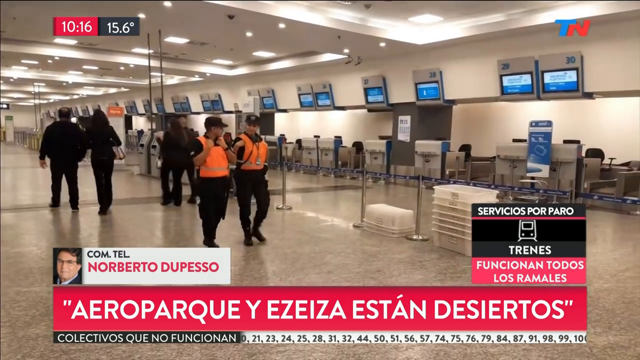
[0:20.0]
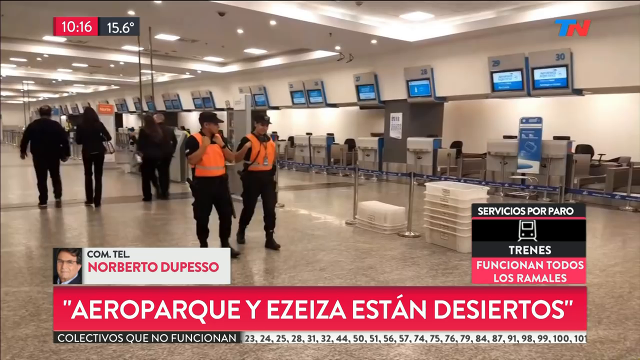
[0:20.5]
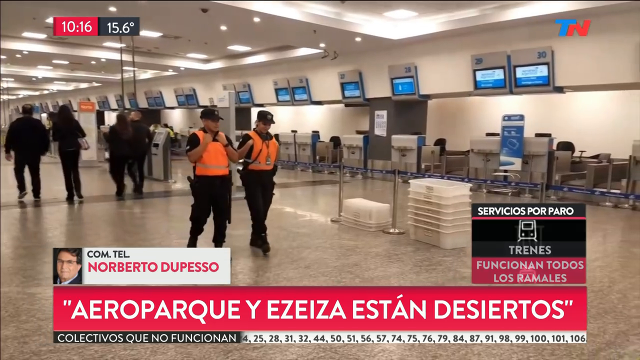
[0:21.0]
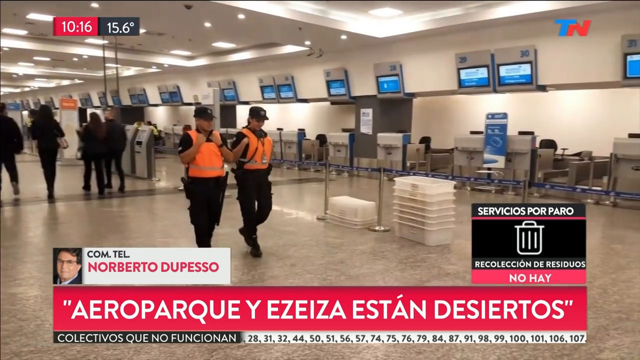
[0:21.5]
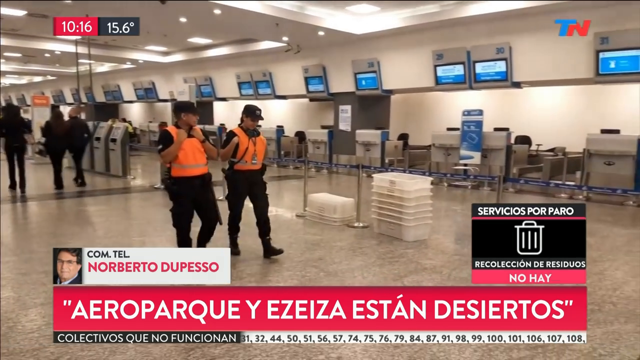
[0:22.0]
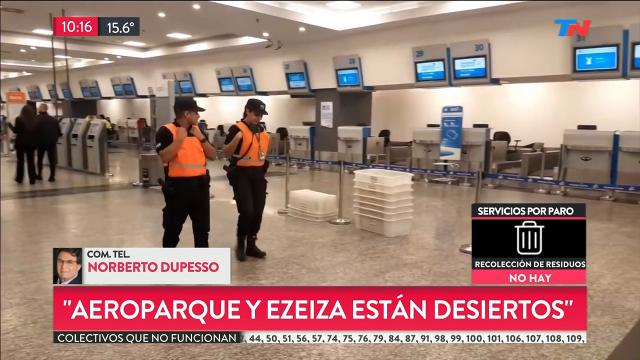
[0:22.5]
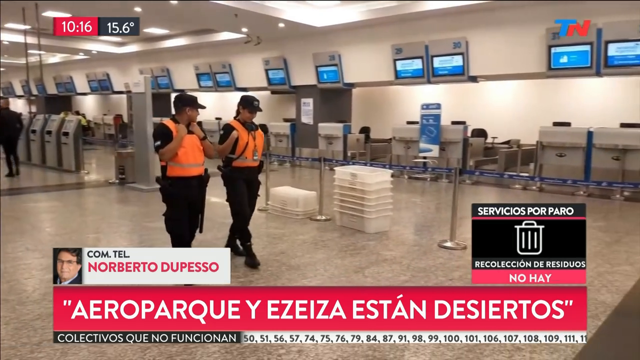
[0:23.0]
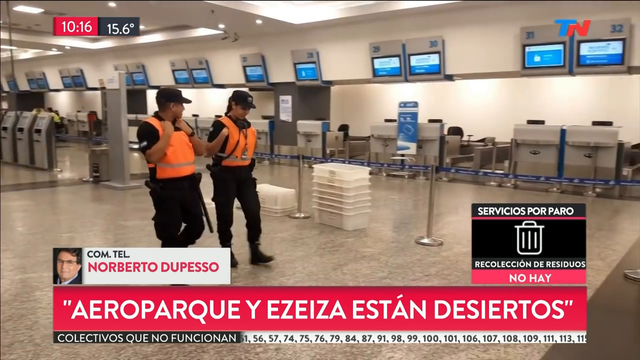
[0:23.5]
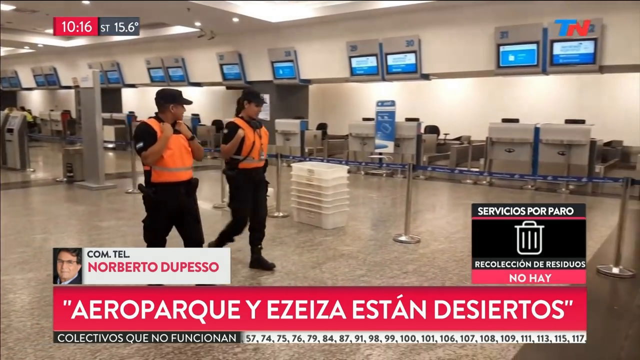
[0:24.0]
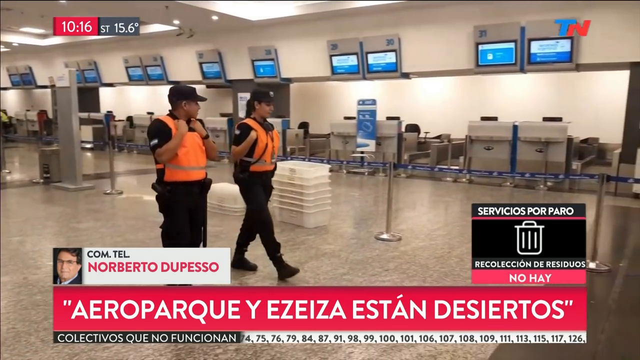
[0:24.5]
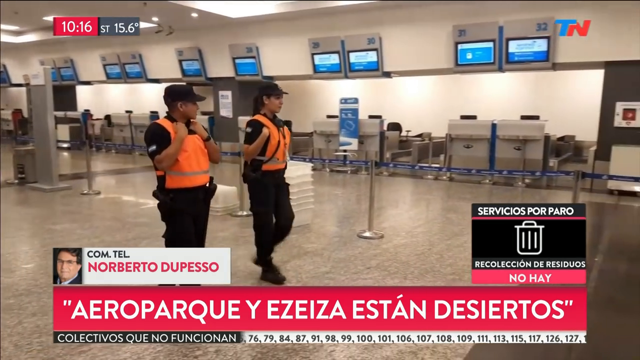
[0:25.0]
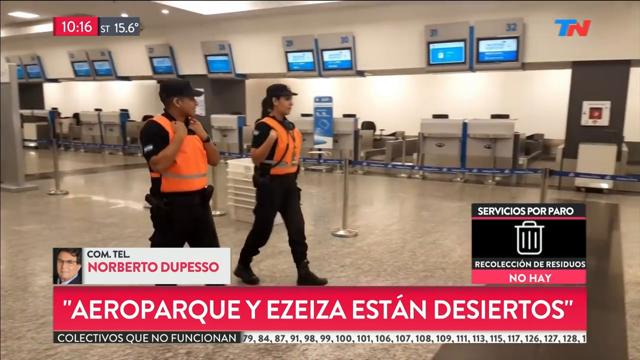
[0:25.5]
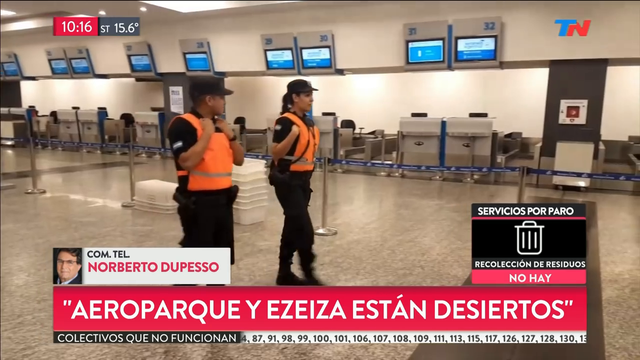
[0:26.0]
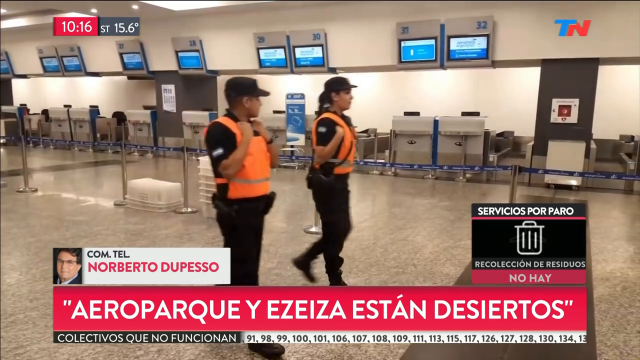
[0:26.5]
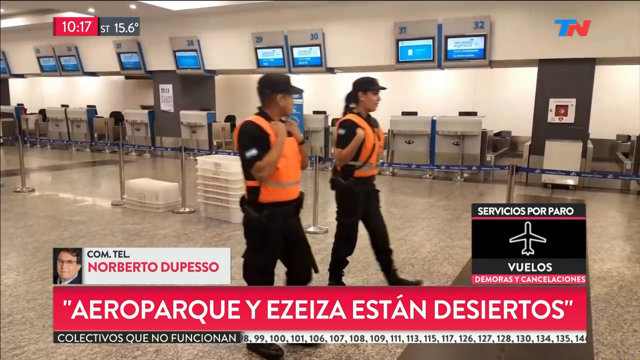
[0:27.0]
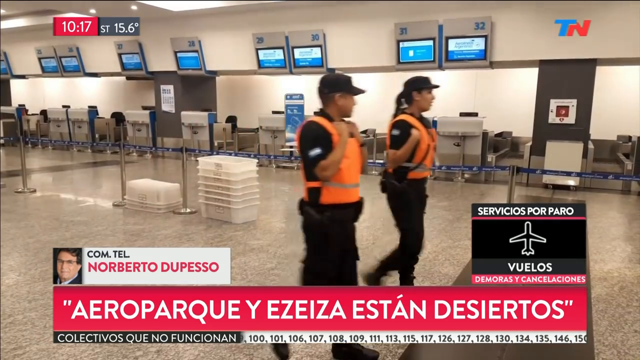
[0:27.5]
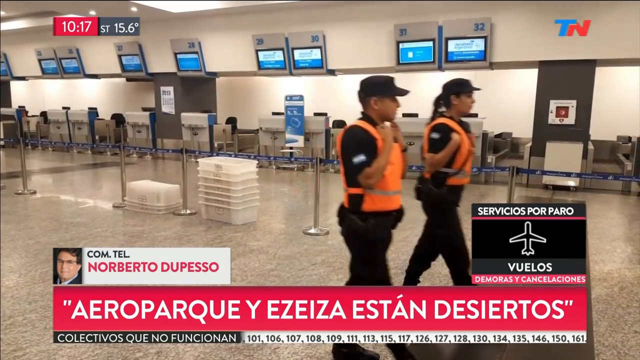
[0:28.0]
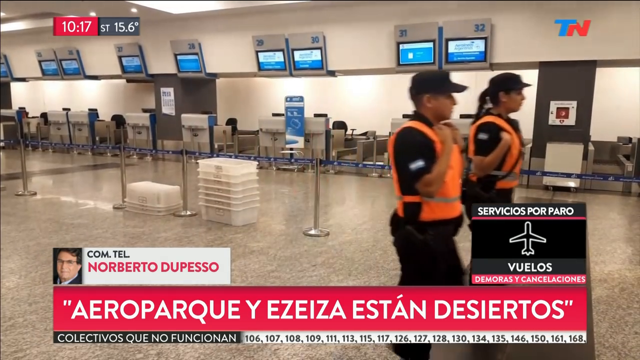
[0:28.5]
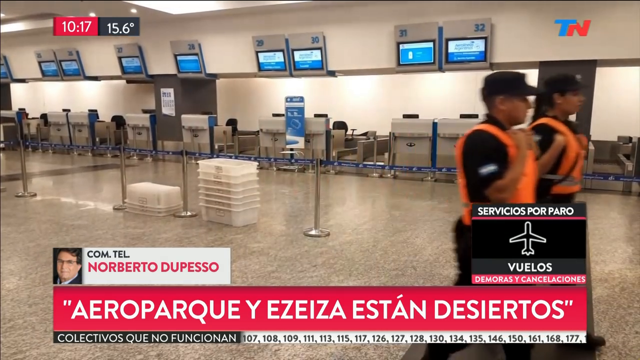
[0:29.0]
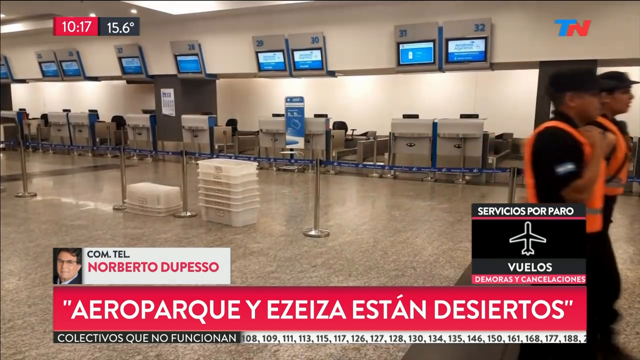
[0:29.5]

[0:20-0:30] The interior of the rail station shows how its infrastructure is arranged. Two girls wearing orange reflectors walk toward the camera, while four passengers dressed in black walk away from it. Small screens at each substation show passengers the departure and arrival times and destinations. The floor is shiny, and there are banners in a corner as well as entrances. The station is wide.